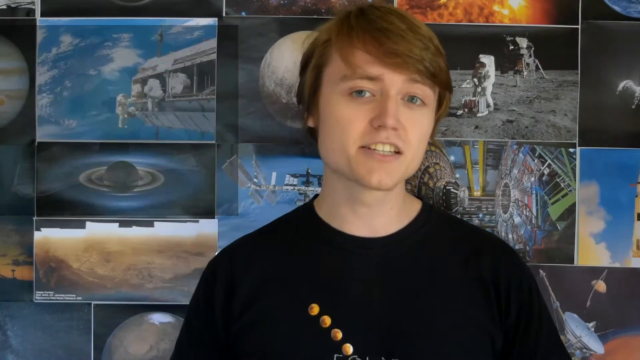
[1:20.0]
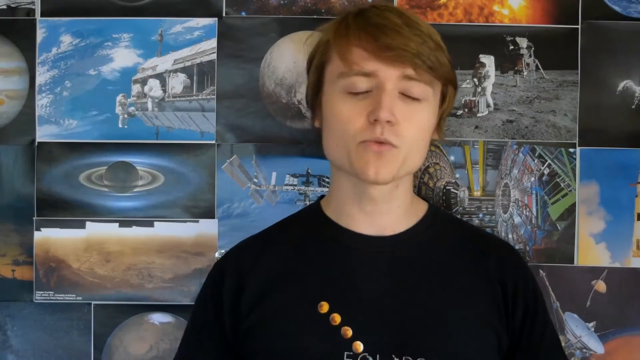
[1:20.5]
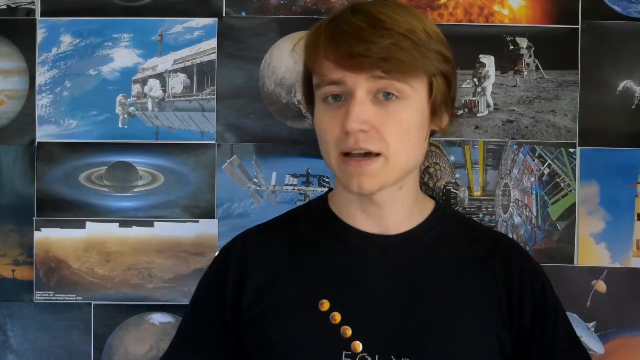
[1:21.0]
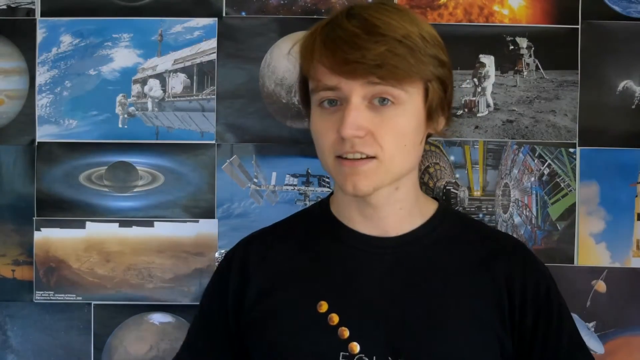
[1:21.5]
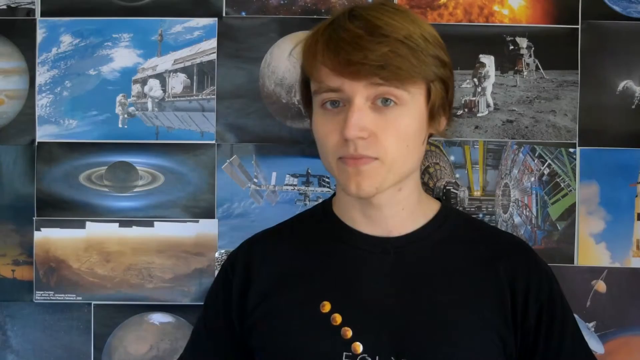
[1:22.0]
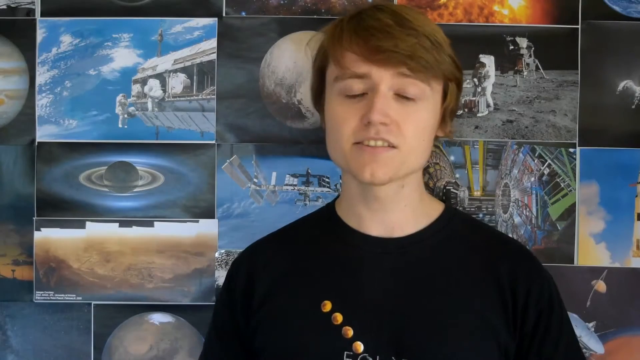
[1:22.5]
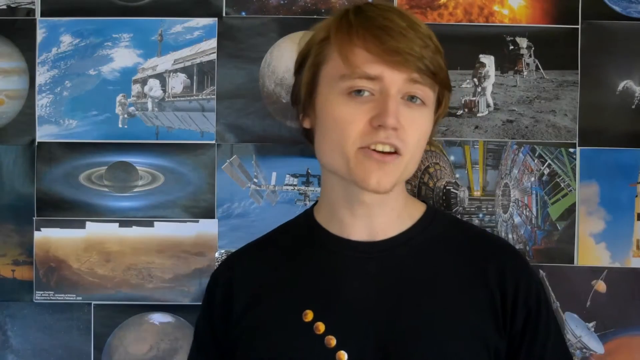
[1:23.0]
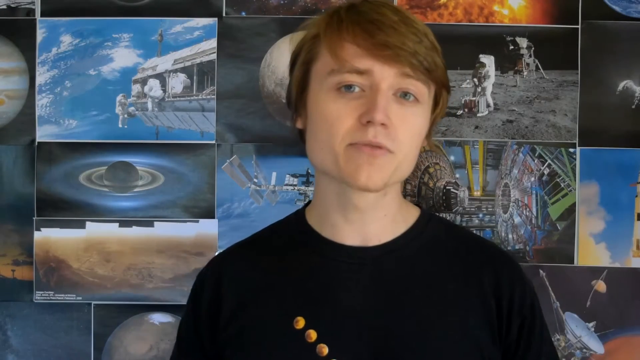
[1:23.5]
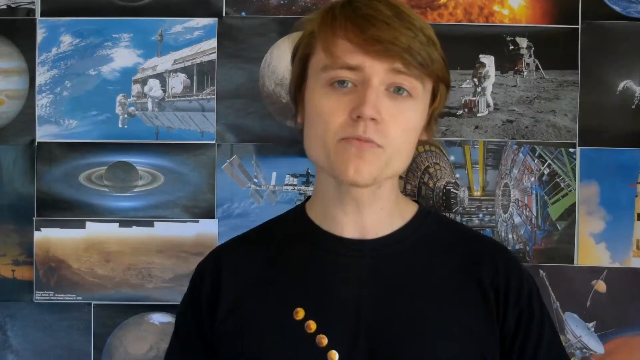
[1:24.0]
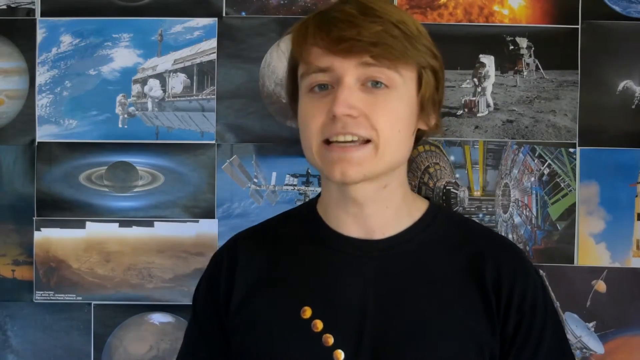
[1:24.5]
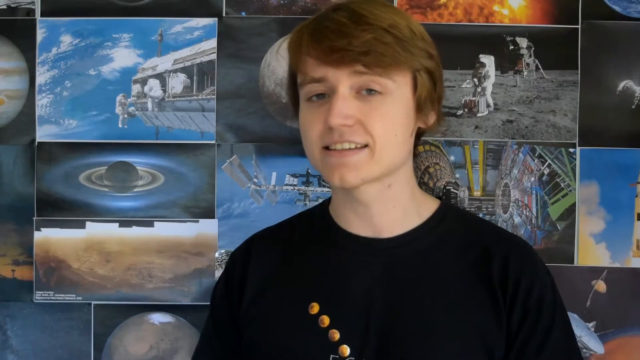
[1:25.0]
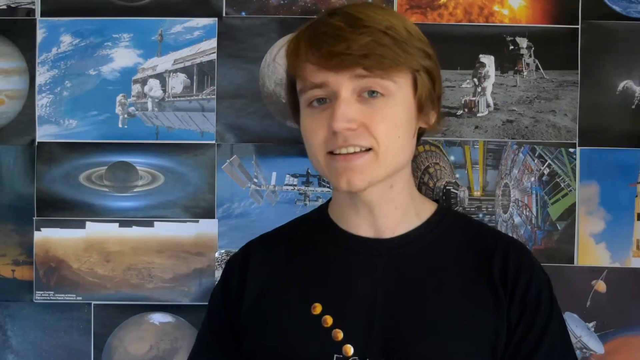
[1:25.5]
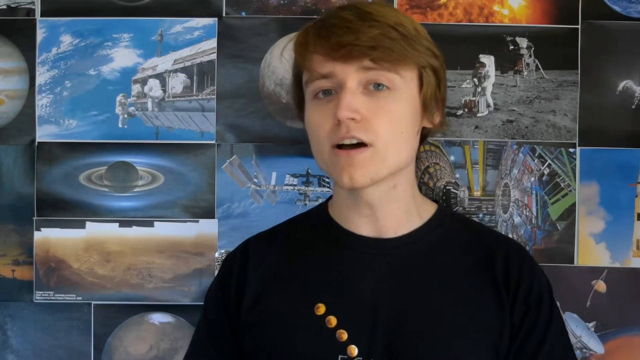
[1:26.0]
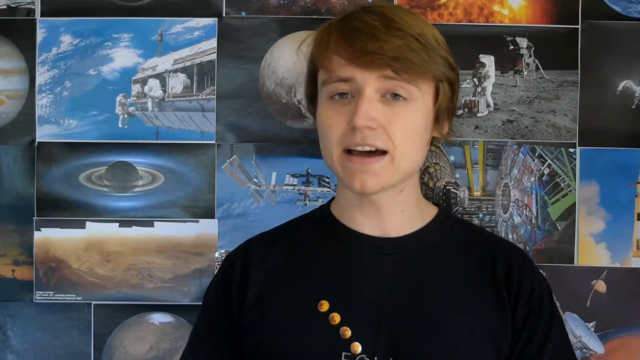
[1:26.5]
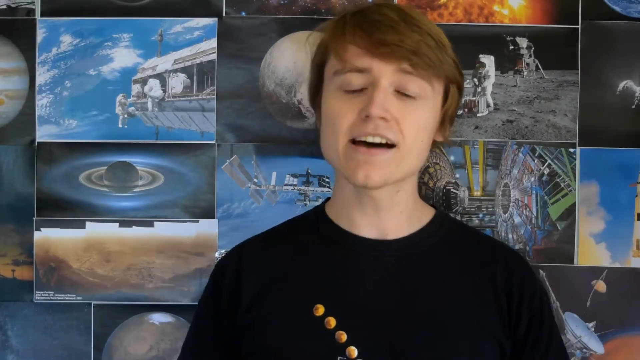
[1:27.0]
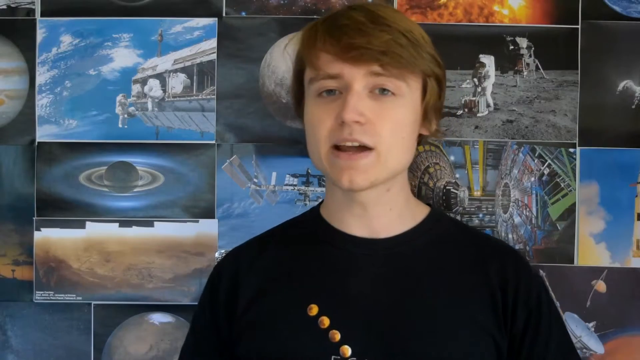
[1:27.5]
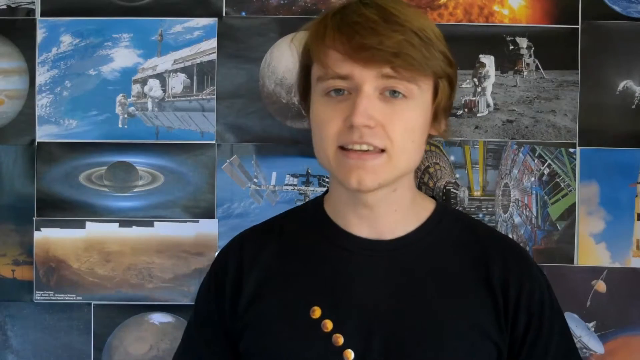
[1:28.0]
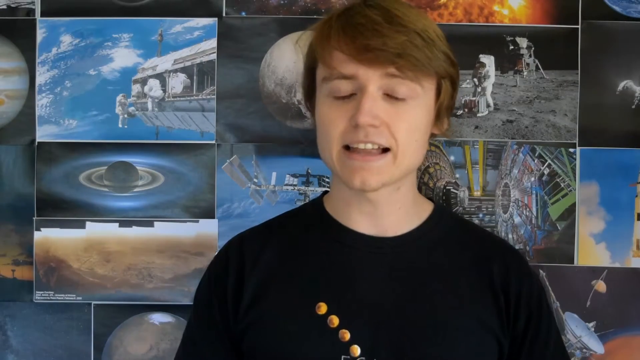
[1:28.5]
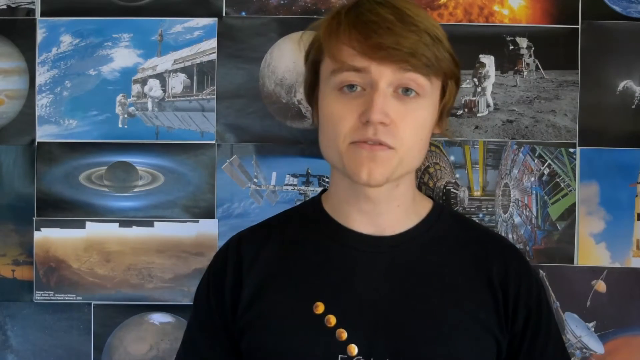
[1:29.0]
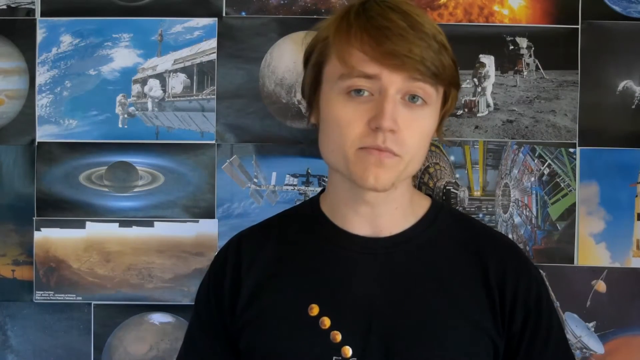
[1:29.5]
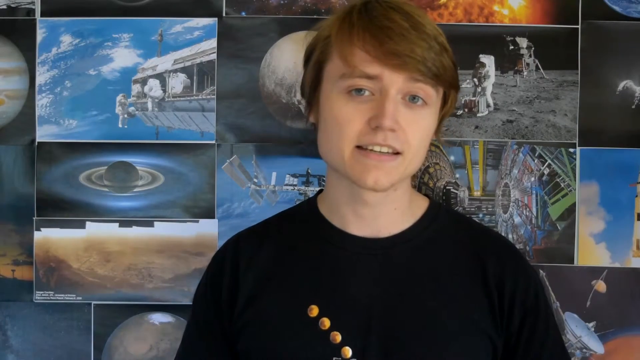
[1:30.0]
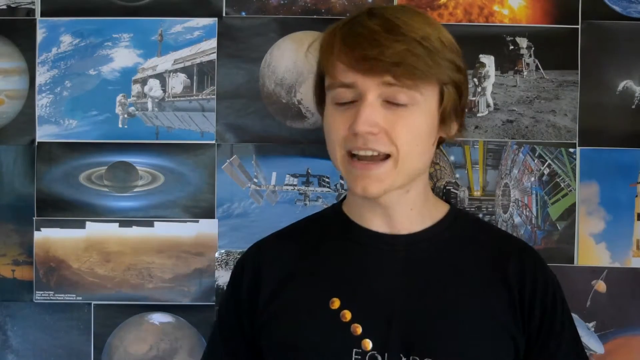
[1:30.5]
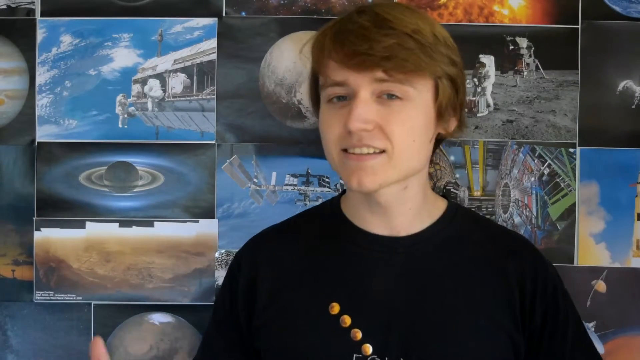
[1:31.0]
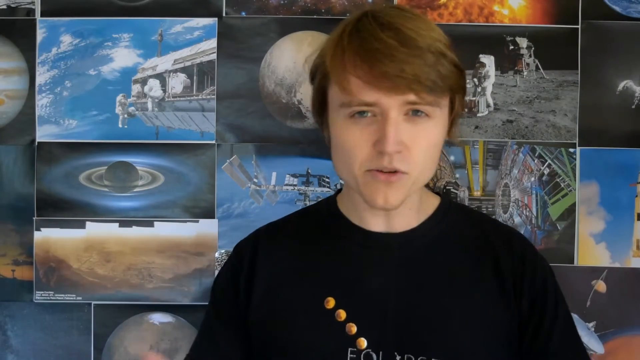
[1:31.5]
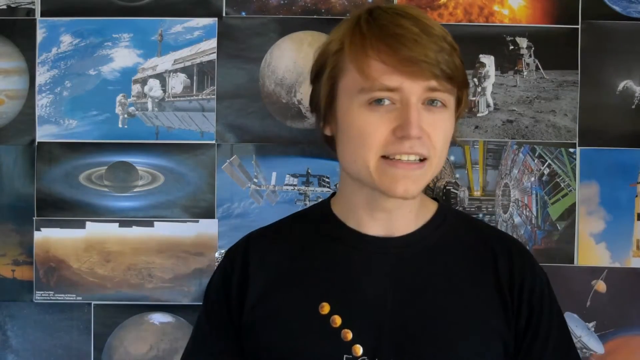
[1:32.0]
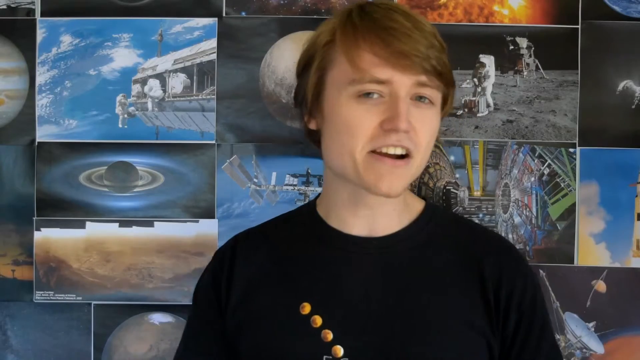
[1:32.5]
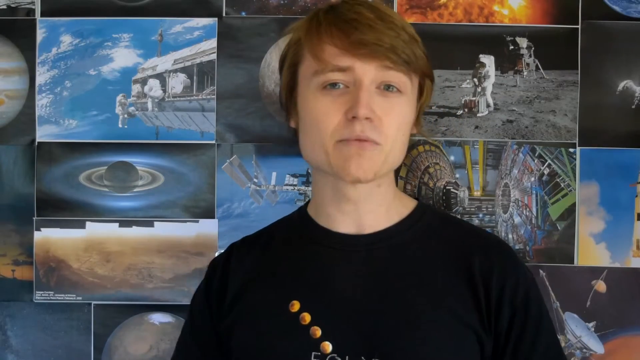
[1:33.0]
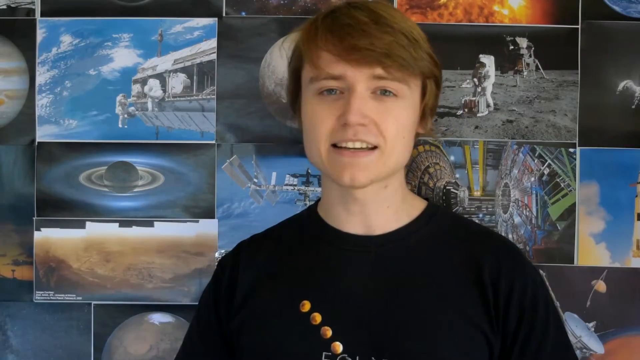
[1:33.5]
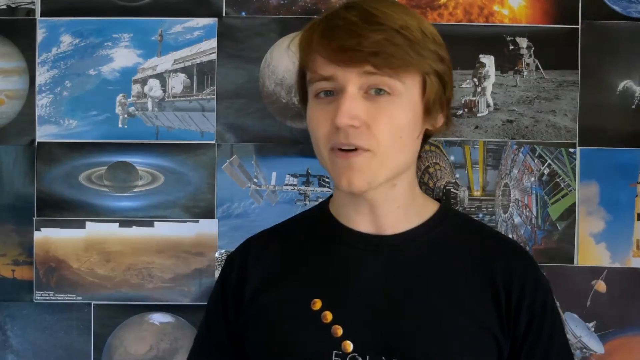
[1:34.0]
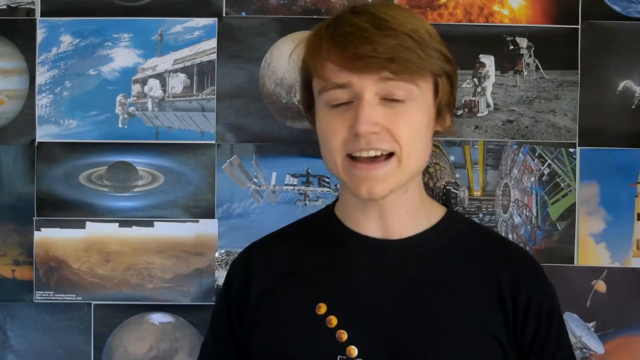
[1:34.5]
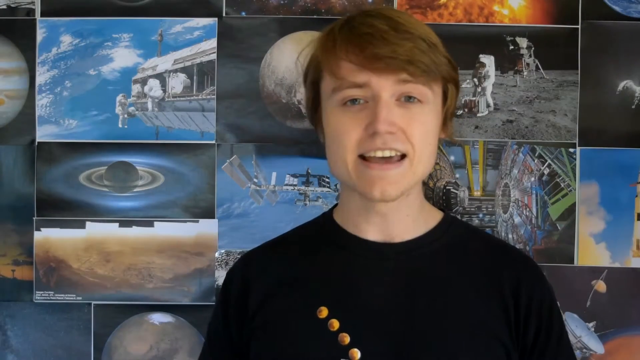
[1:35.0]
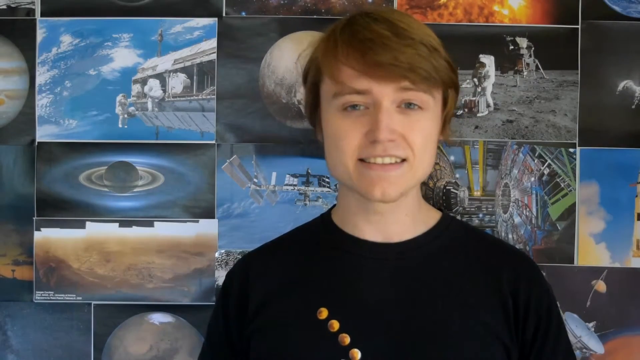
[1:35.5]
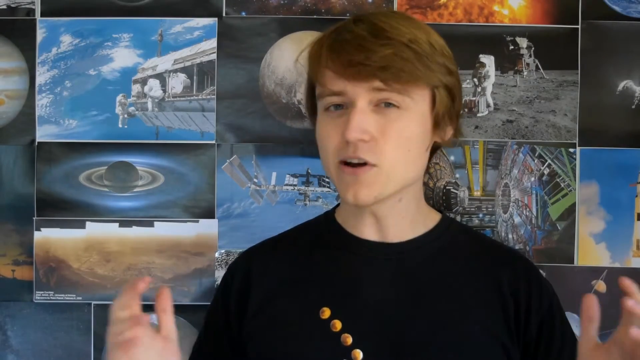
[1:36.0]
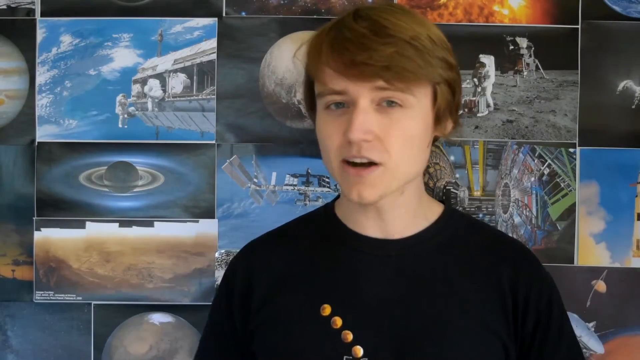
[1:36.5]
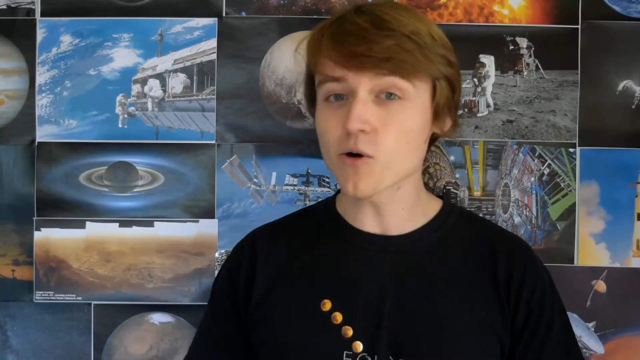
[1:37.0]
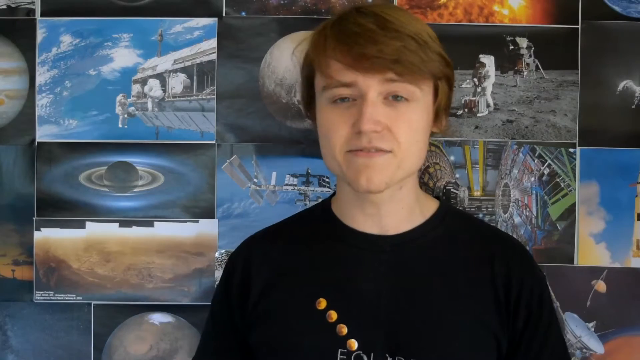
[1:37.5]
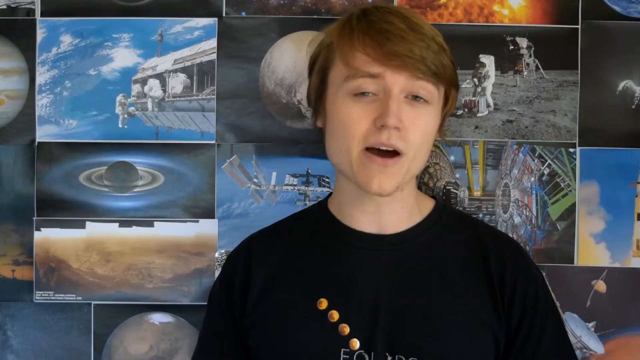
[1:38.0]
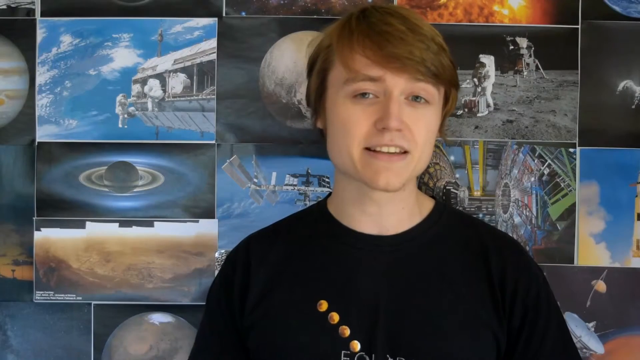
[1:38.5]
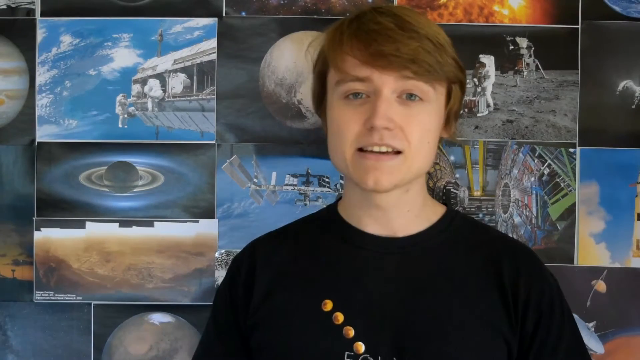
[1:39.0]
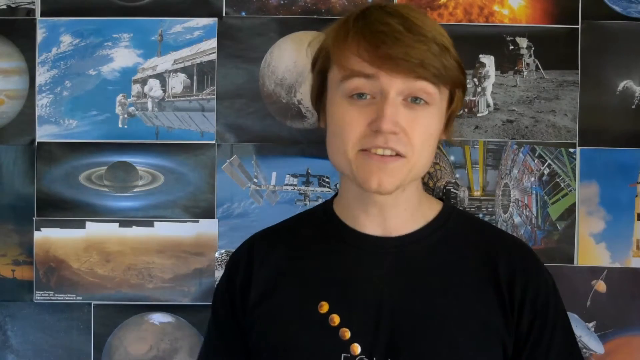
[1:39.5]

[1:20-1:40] The boy is talking. He wears a black t-shirt, his hair is a little golden, and he seems to be about 19 to 21 years old. Behind him are pictures of interstellar space, the world seen from the moon, a lot of plants and a lot of machines.